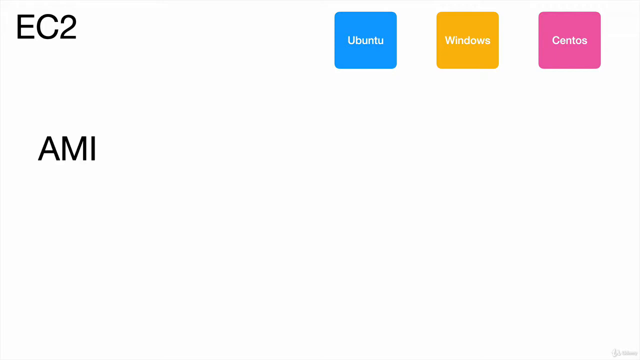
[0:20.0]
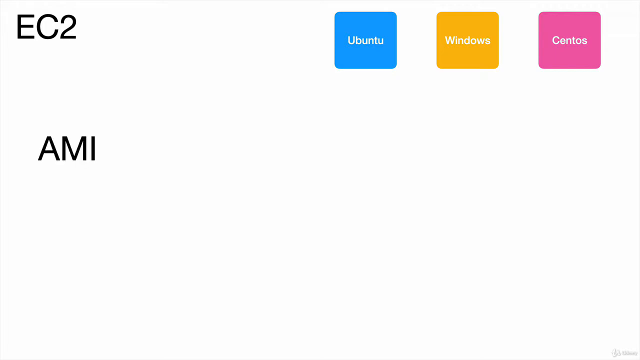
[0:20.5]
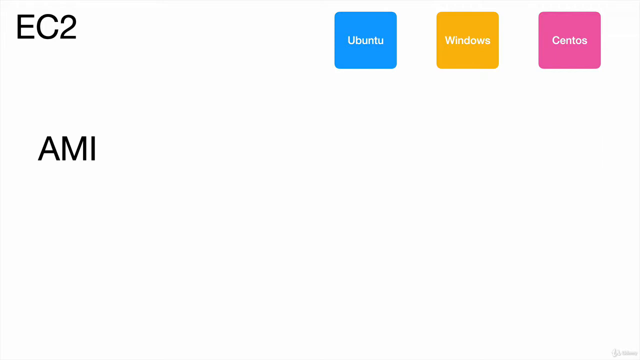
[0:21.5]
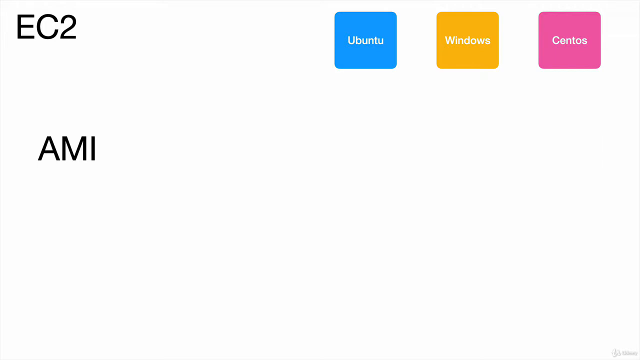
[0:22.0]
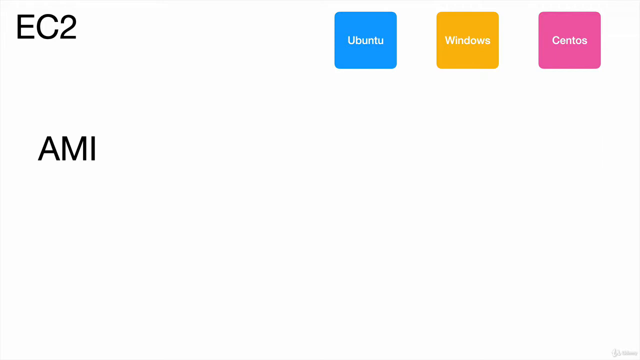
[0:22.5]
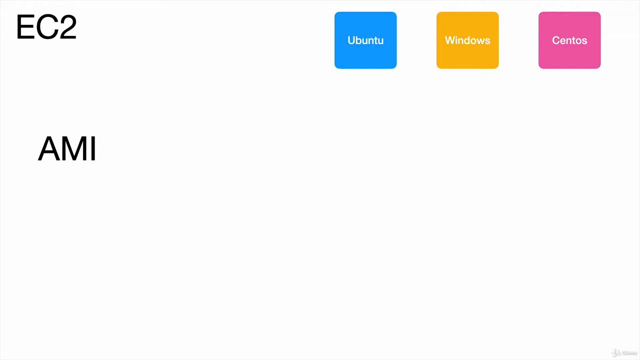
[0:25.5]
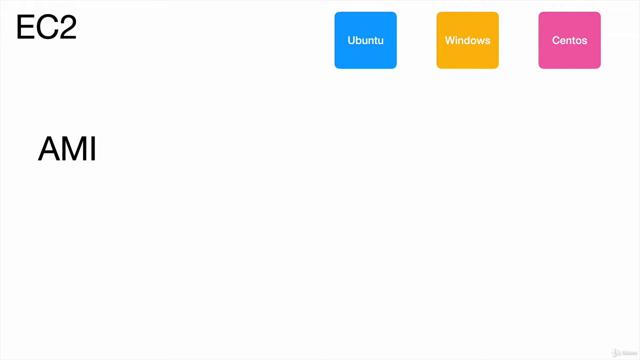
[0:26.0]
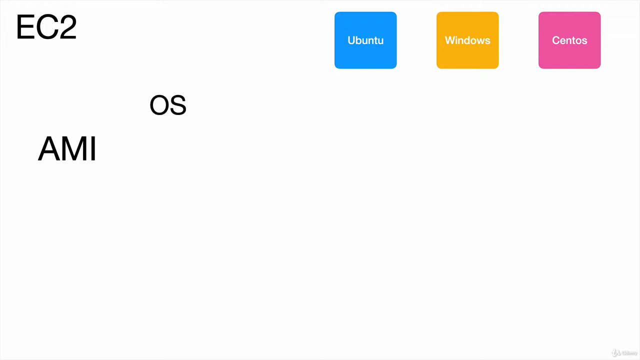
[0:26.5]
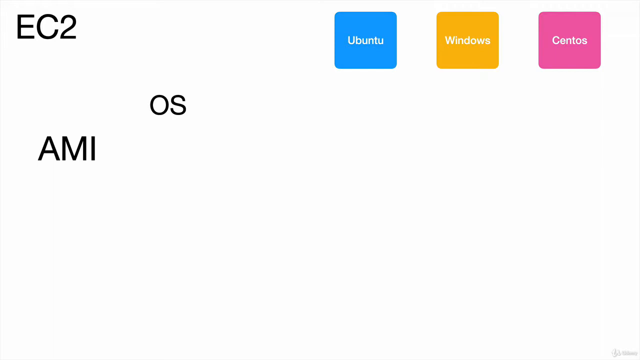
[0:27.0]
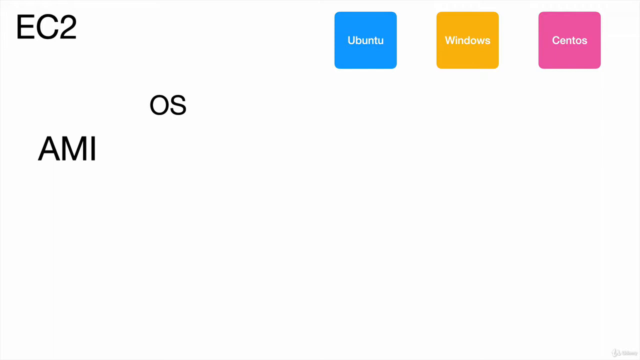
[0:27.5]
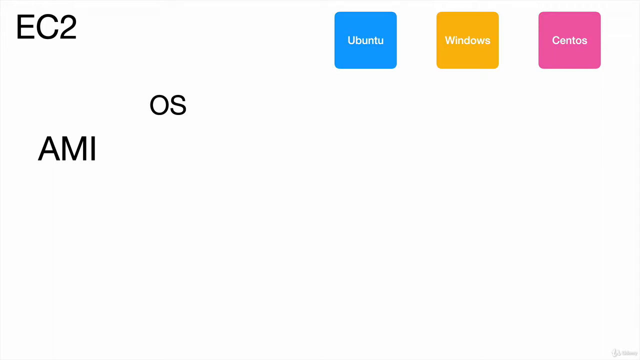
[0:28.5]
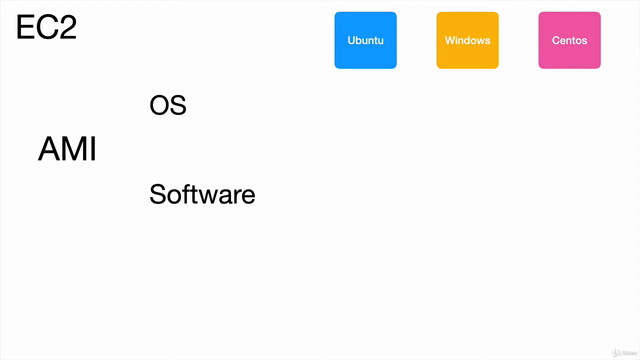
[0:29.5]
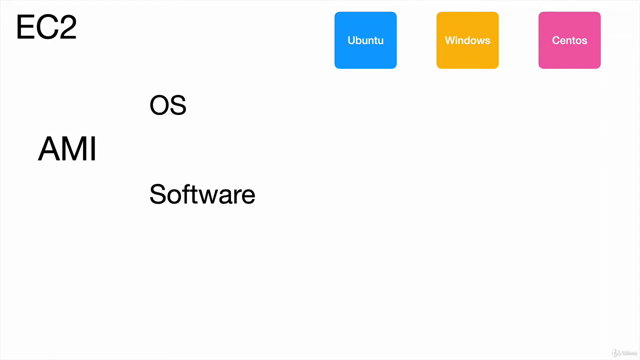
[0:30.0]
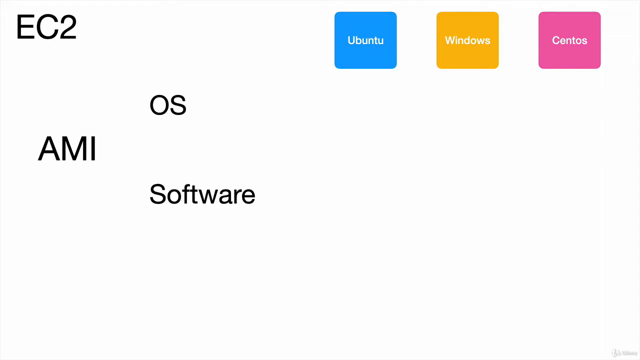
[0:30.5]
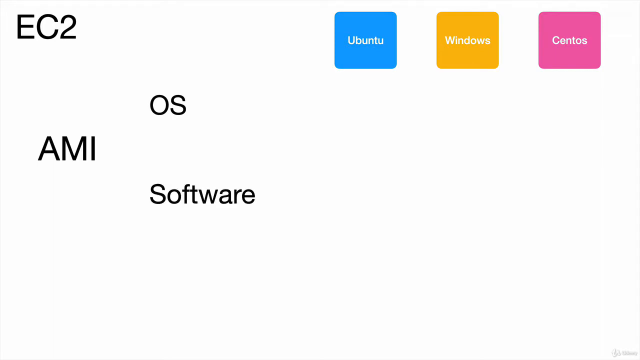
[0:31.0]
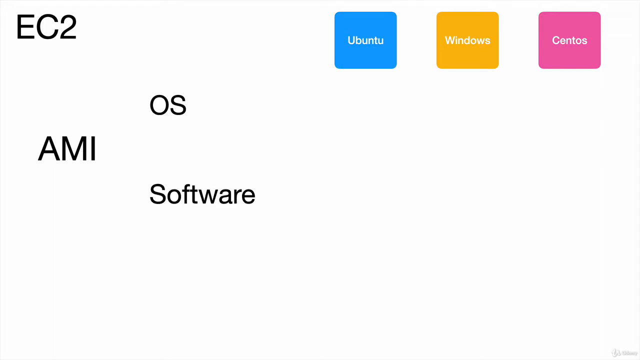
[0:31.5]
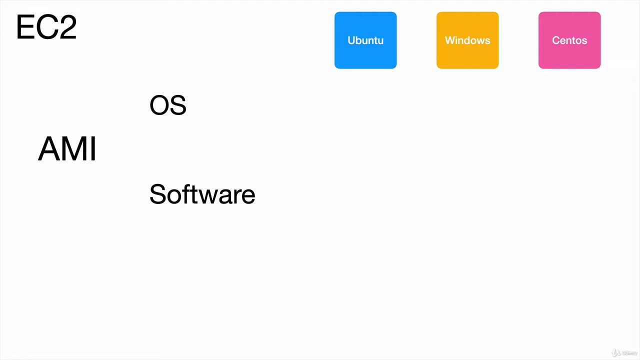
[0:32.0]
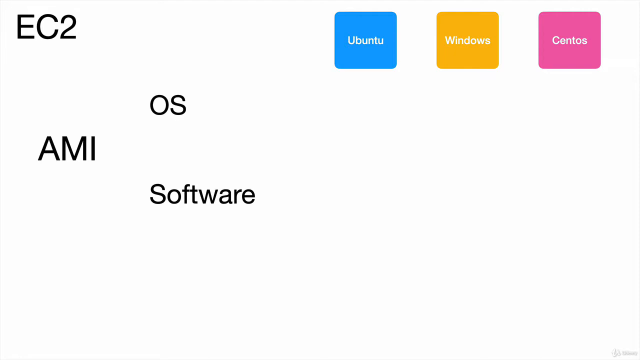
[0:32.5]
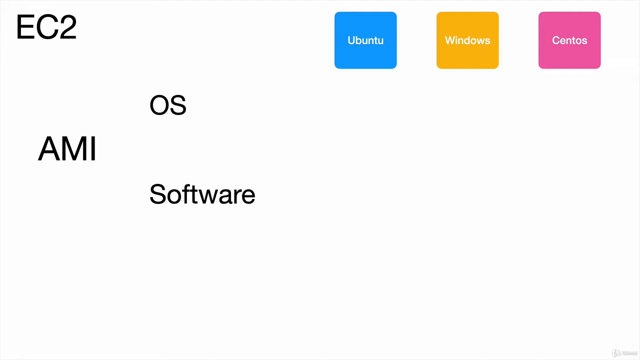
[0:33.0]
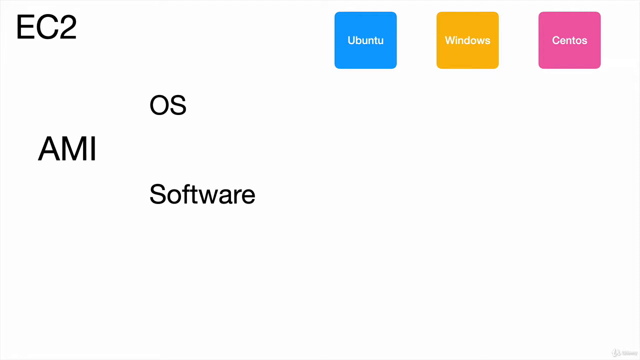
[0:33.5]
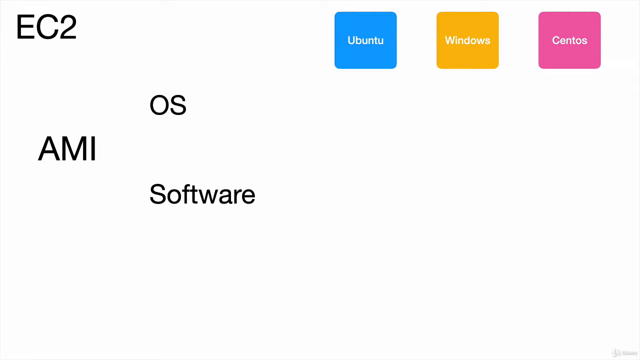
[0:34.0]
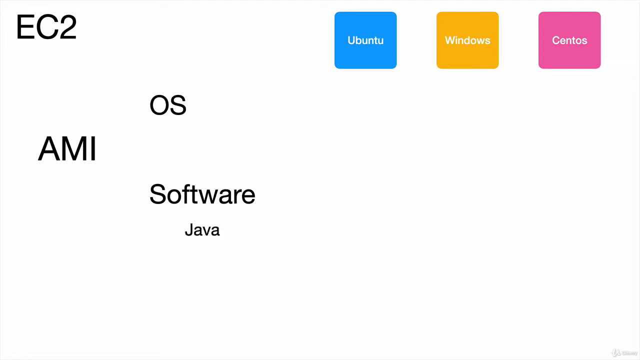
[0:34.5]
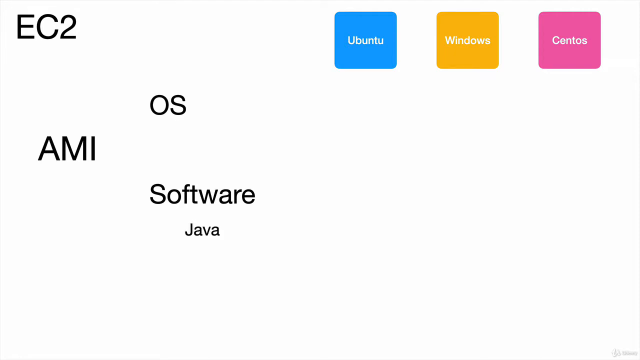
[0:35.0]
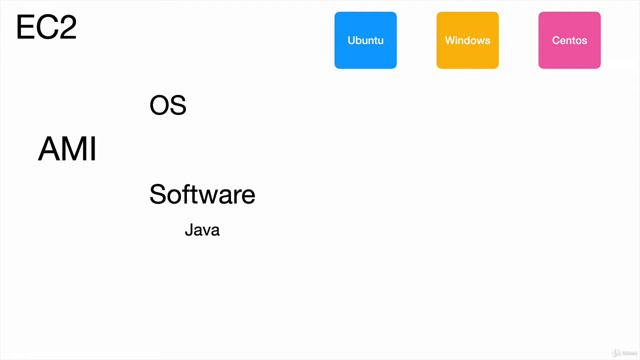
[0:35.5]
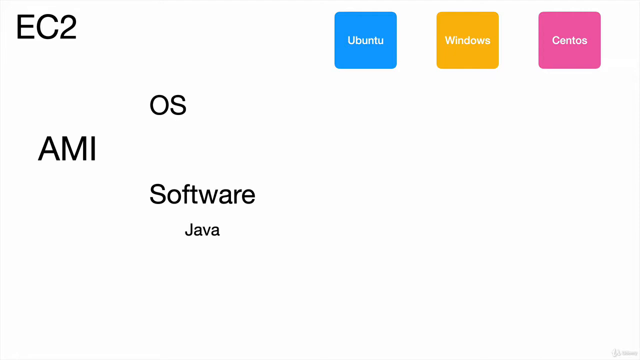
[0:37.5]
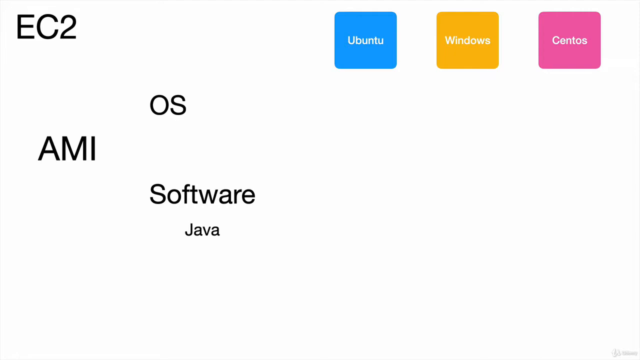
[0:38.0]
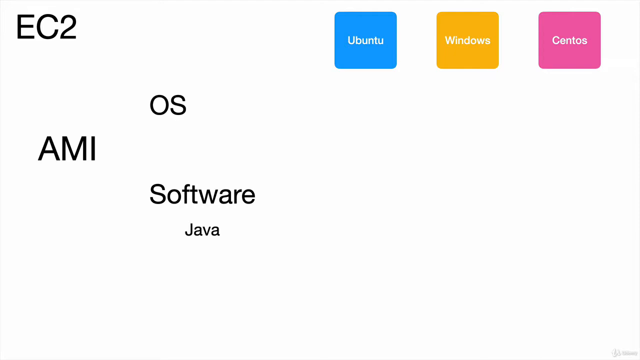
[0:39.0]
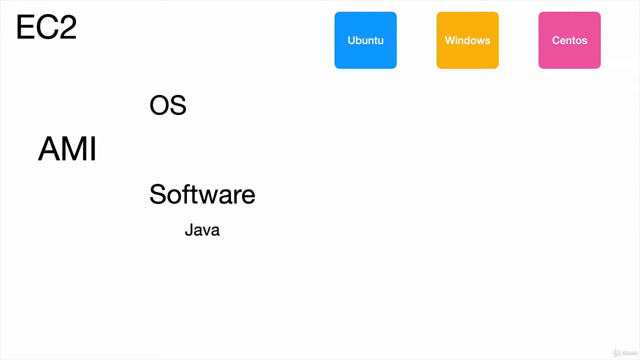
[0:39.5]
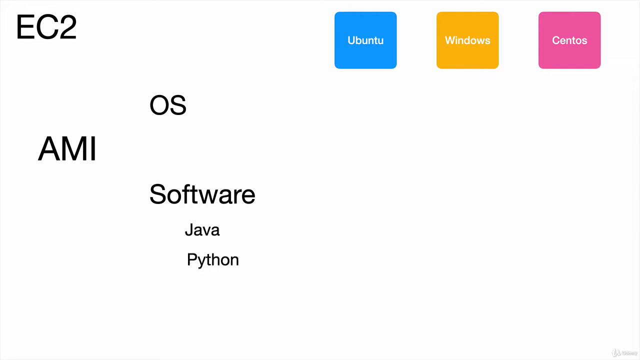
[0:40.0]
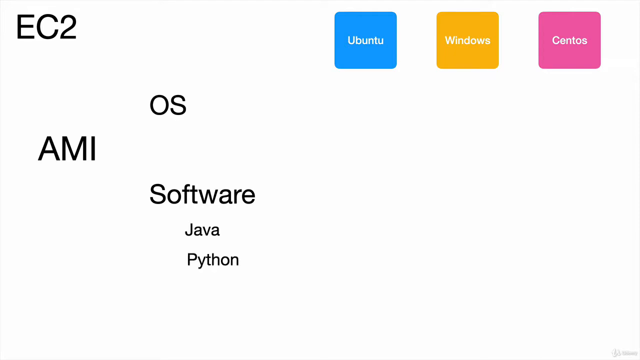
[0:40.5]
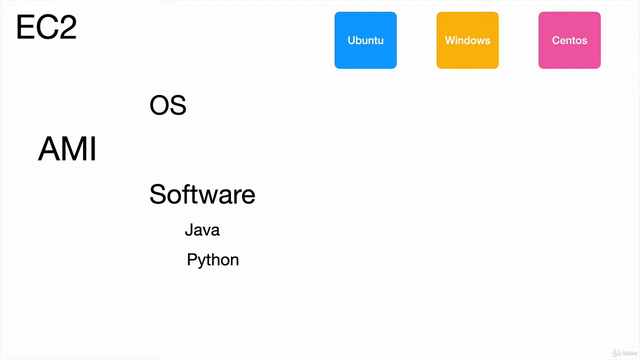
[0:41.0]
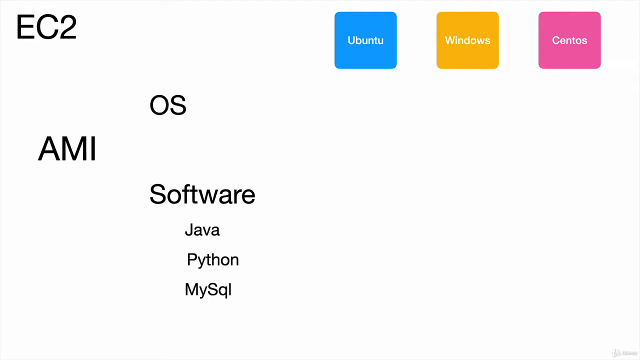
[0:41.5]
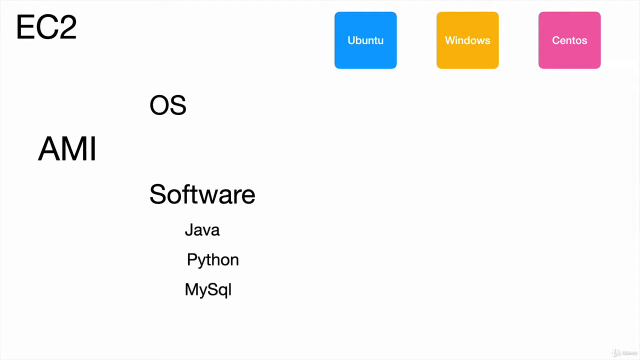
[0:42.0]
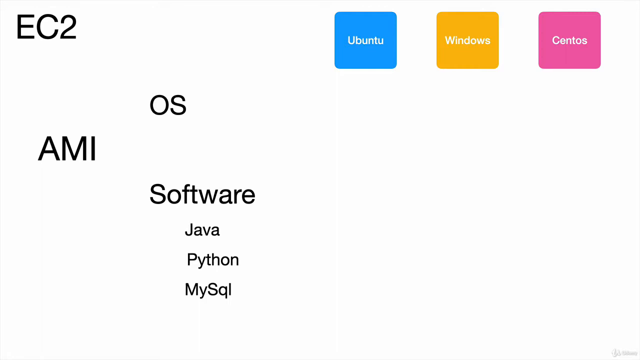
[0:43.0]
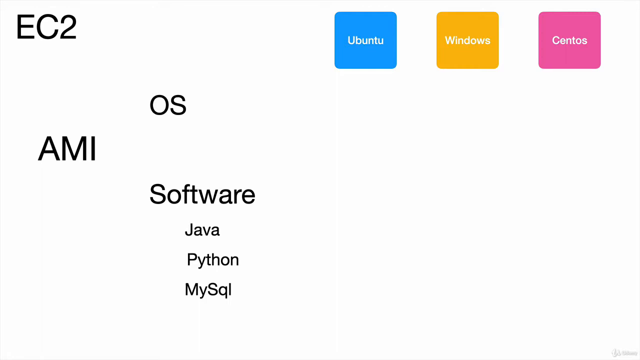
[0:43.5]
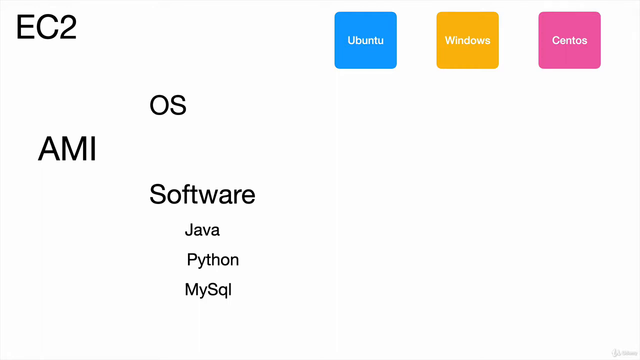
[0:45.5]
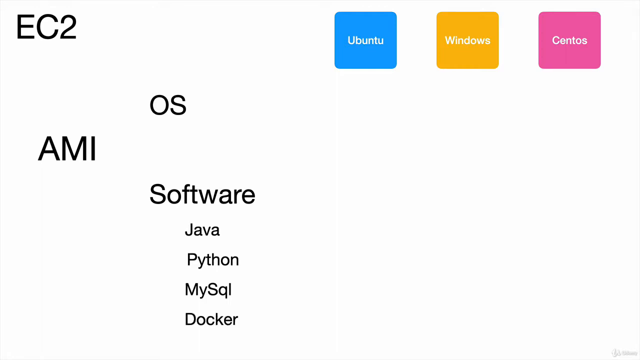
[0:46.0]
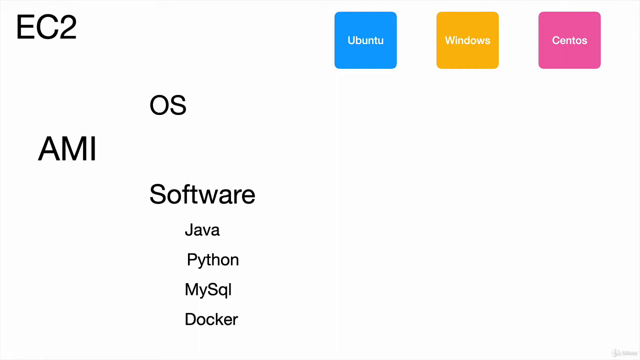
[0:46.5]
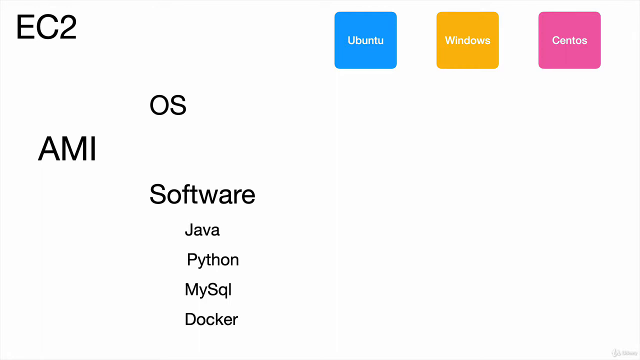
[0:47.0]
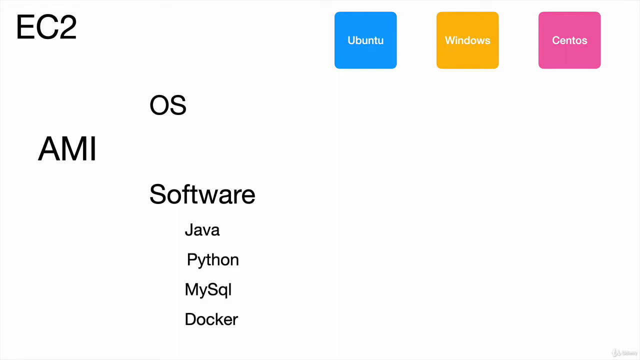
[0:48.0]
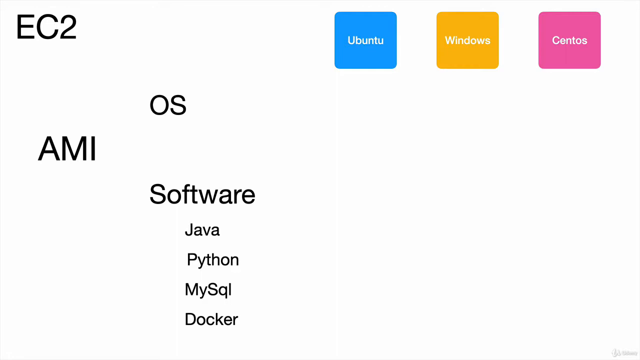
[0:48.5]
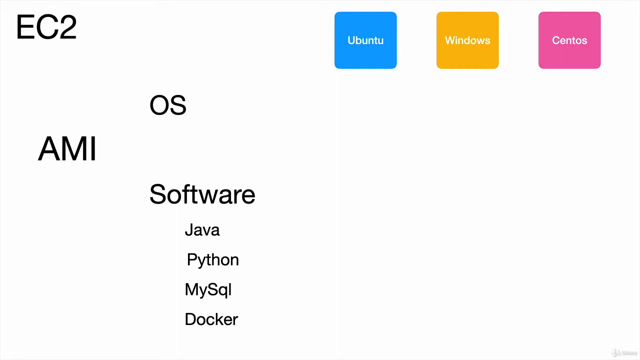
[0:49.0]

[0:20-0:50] The slightly wide video has a plain white background. In the upper left, "EC2" appears in a medium-sized black capital font. About 40% down from the top, still on the left but indented, "AMI" appears in the same size black capital letters. In the upper right are three squares filled with different colors, each with a word in white, separated by gaps: "Ubuntu" in blue, "Windows" in yellow and "CentOS" in pink. Two more words then load in: "OS" to the upper right of "AMI" and "software" to the lower right of it. Below "software", in smaller text, "Java" appears. Right after, "Python" and "MySQL" load just below "Java", and then "Docker" loads below those two.